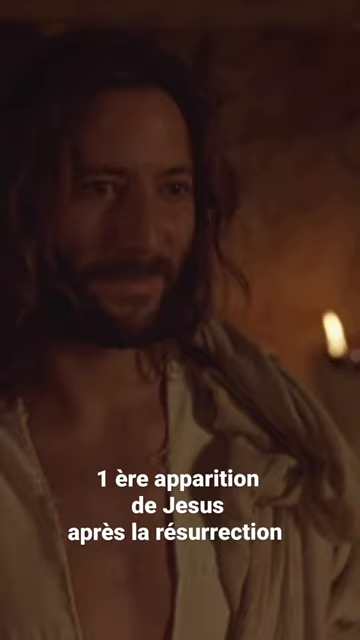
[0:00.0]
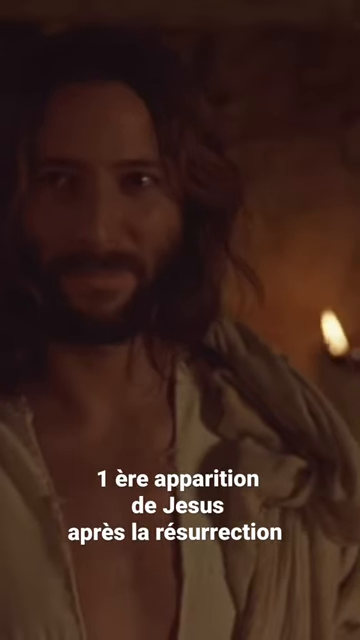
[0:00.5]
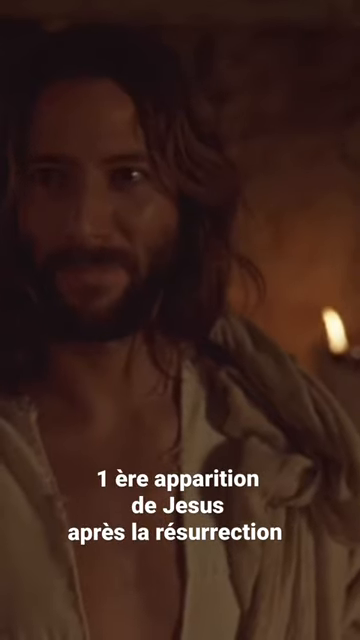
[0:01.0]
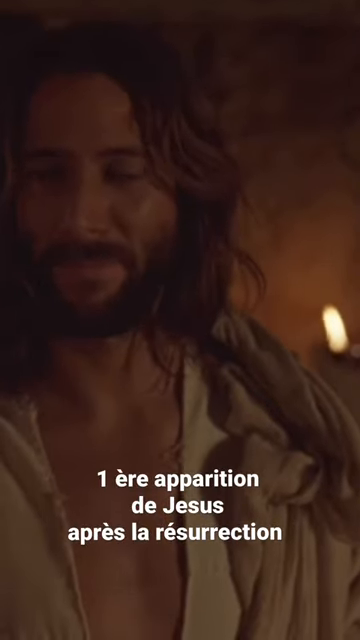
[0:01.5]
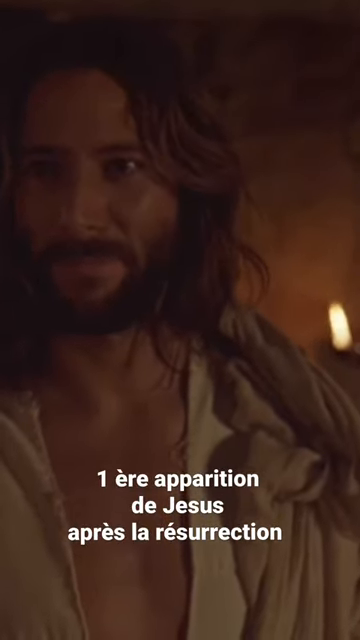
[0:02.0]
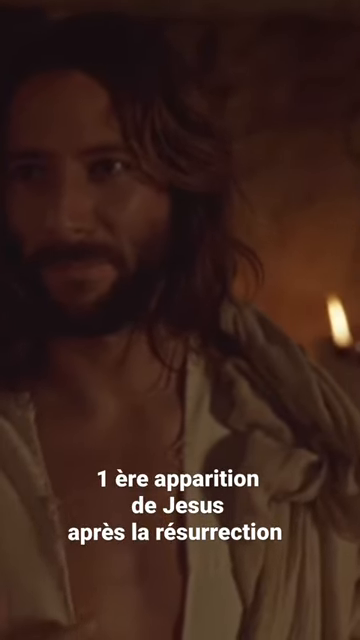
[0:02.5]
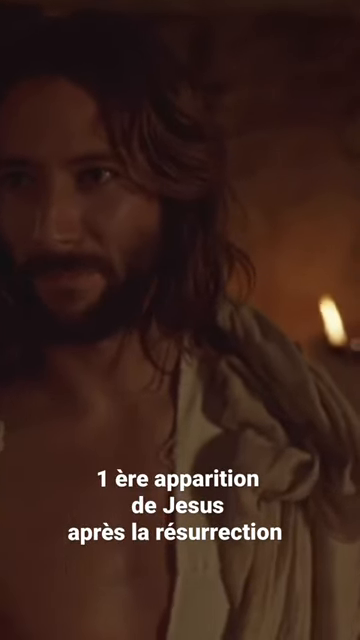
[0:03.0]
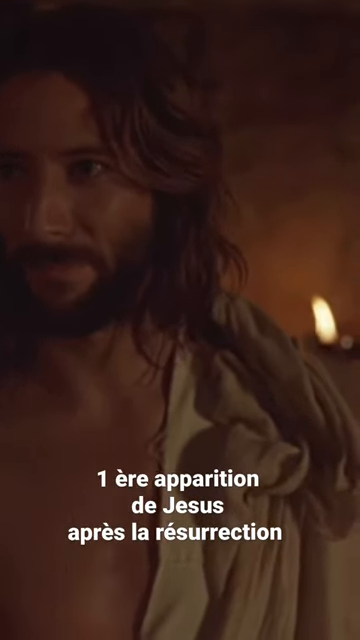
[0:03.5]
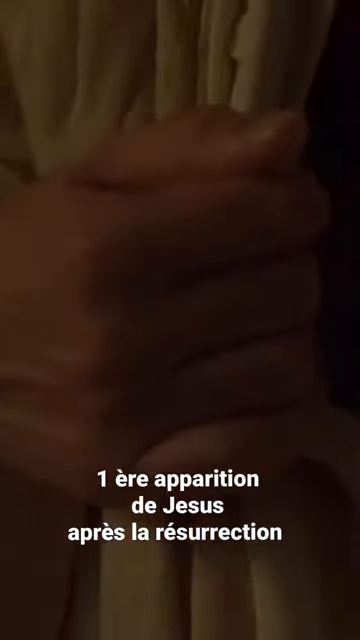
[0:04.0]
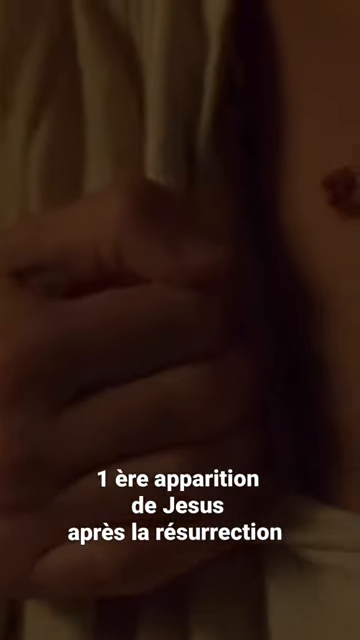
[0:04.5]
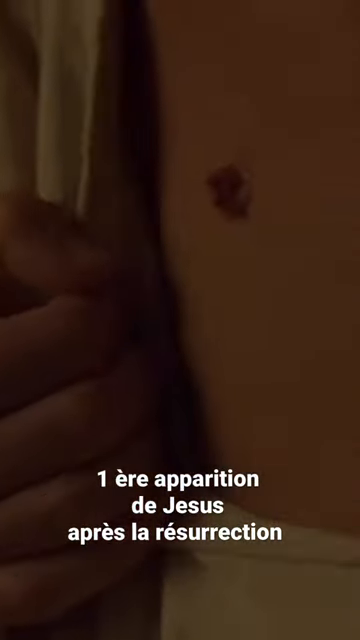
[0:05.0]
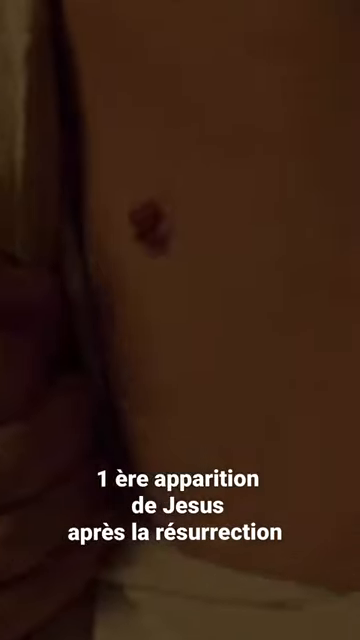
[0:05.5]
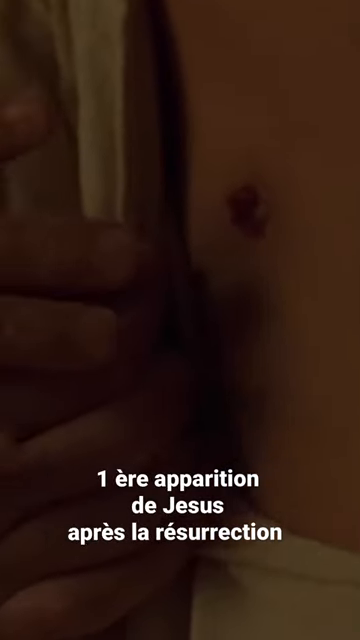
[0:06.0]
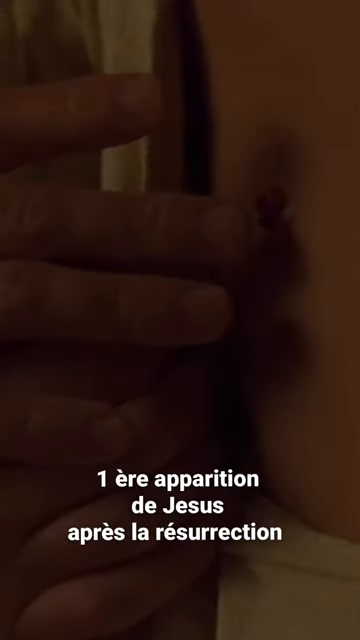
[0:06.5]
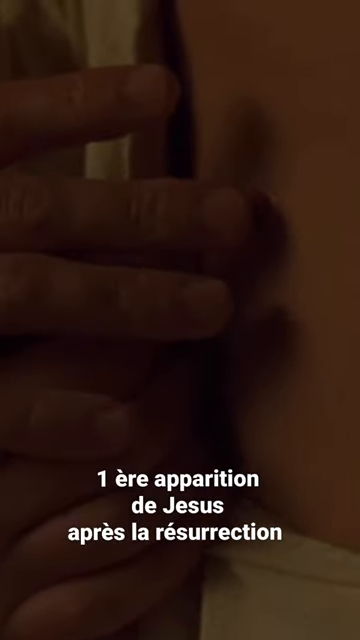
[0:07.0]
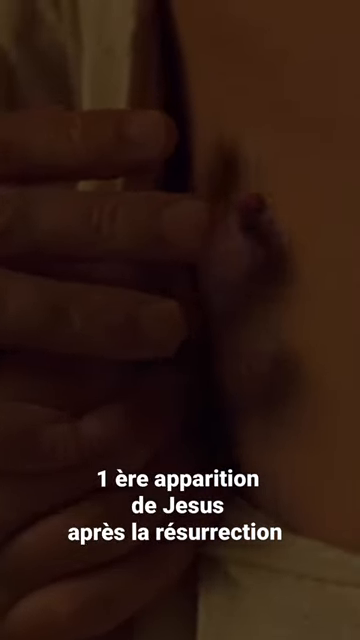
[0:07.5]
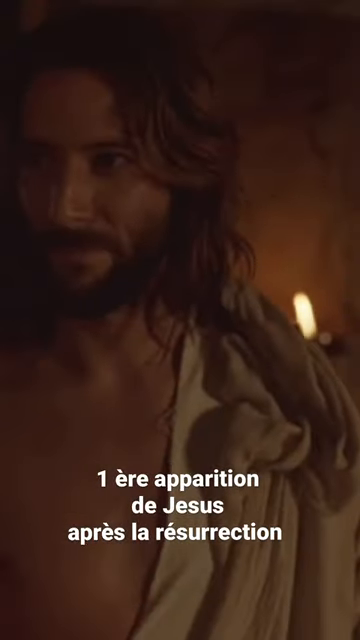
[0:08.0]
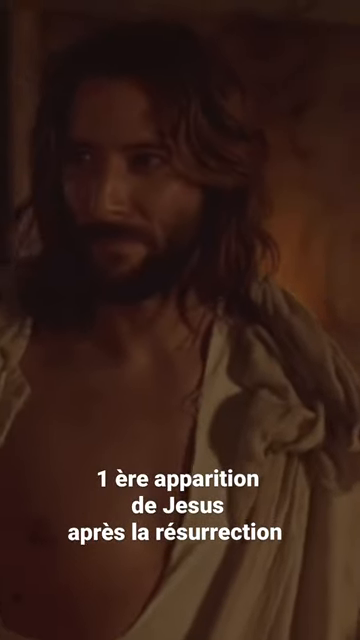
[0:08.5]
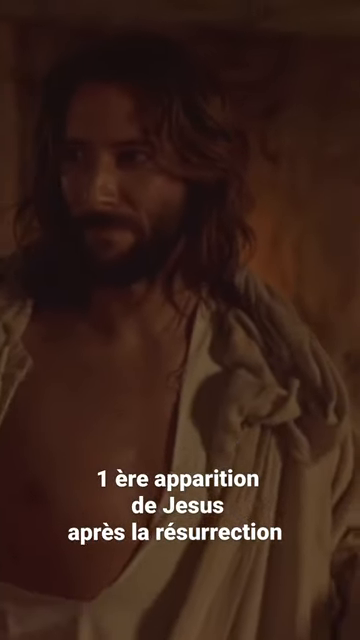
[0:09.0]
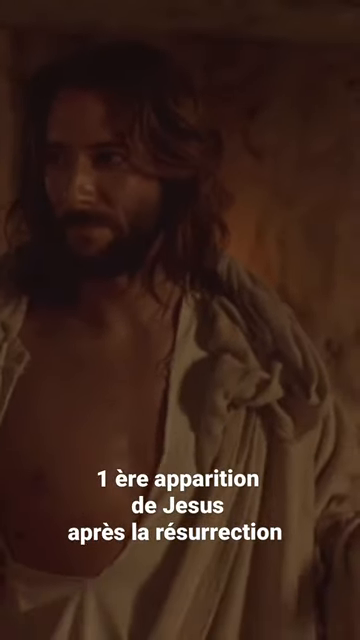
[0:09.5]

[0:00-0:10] In a scene from a movie about Jesus, a very dark, cave-like room is lit with a soft glow by fire torches on the wall. A man dressed as Jesus, wearing robes, is looking forward to the right as the shot begins. He slightly opens his shirt to reveal a wound on his chest and looks around. Text in Spanish at the bottom of the screen reads "1 ere apparition de Jesus apres la resurrection." At the end, the character dressed as Jesus walks forward.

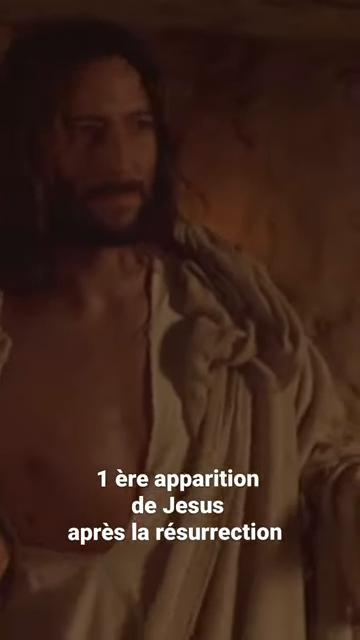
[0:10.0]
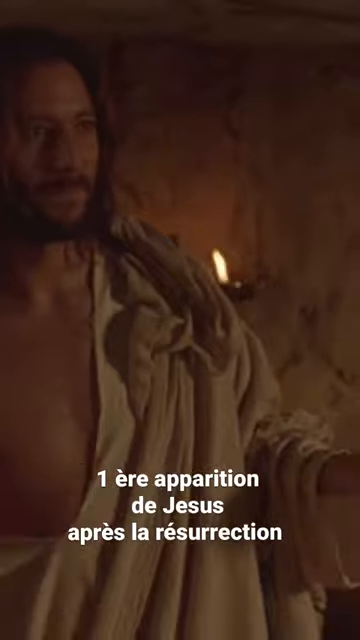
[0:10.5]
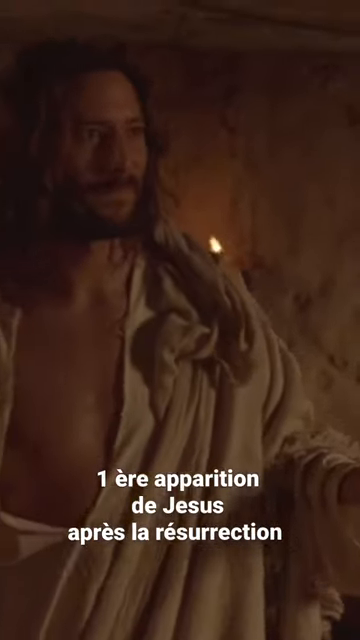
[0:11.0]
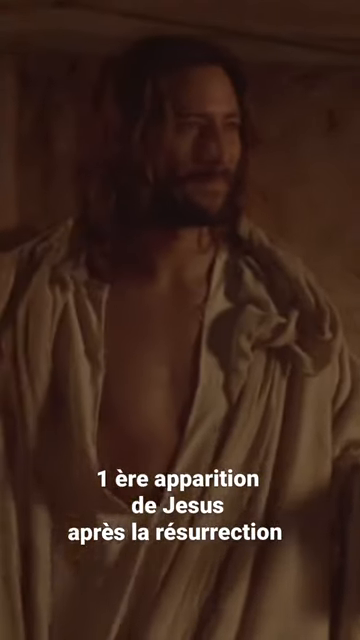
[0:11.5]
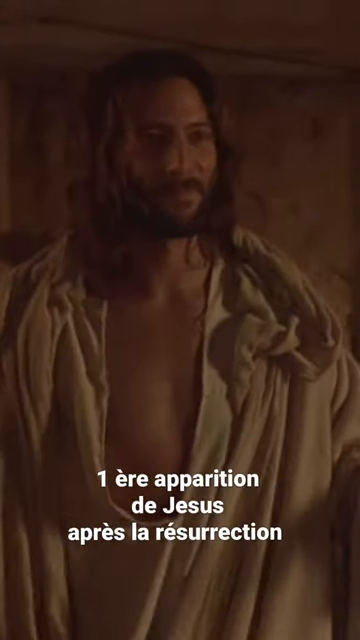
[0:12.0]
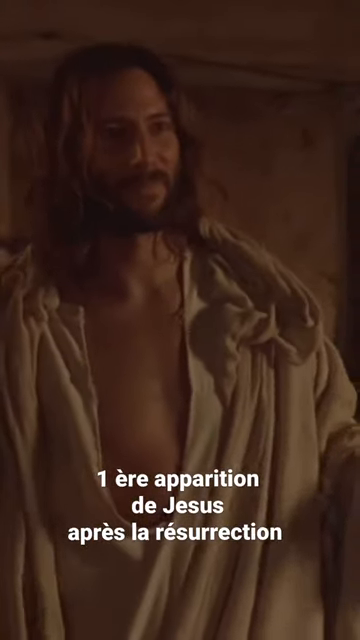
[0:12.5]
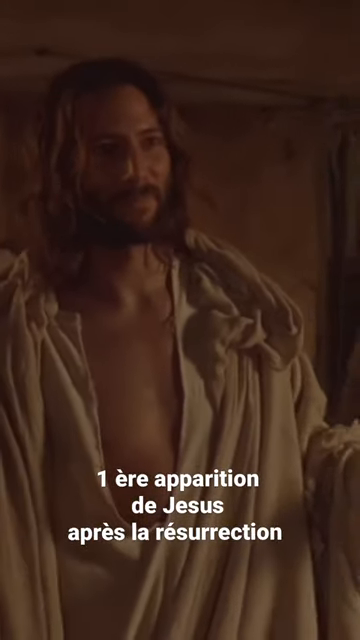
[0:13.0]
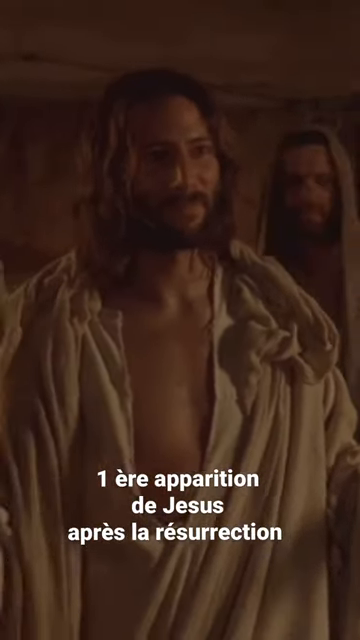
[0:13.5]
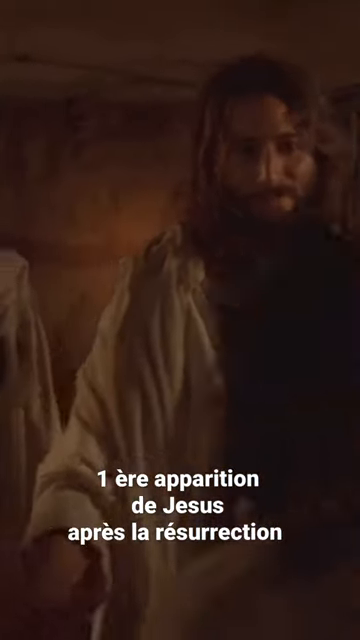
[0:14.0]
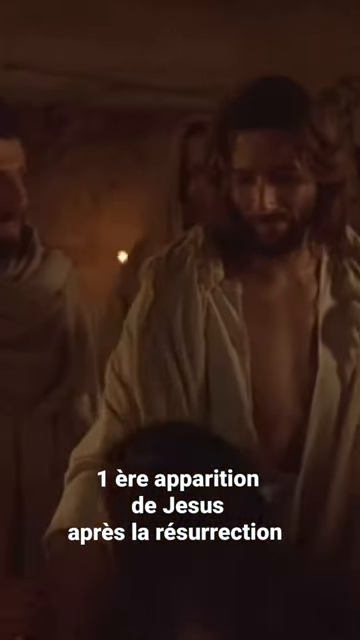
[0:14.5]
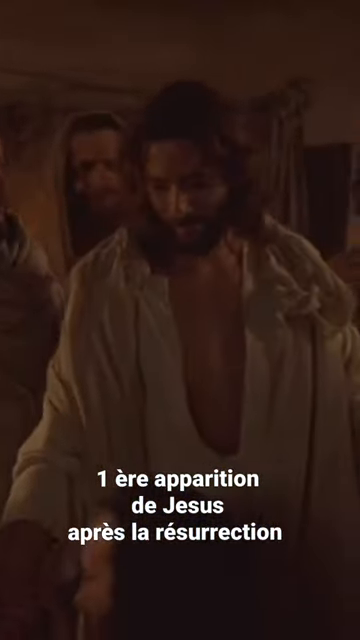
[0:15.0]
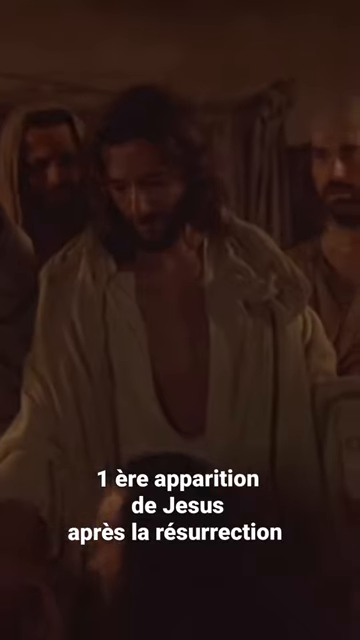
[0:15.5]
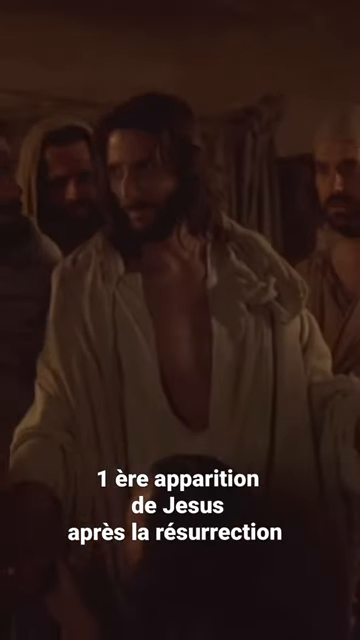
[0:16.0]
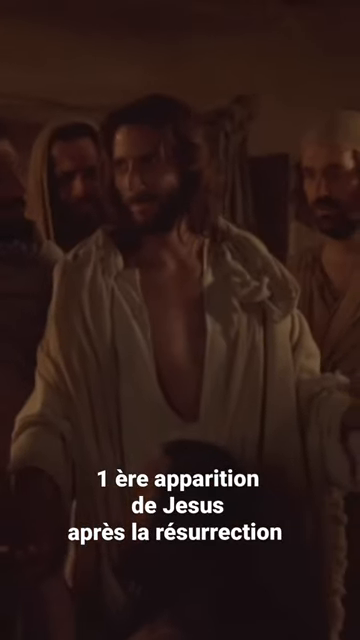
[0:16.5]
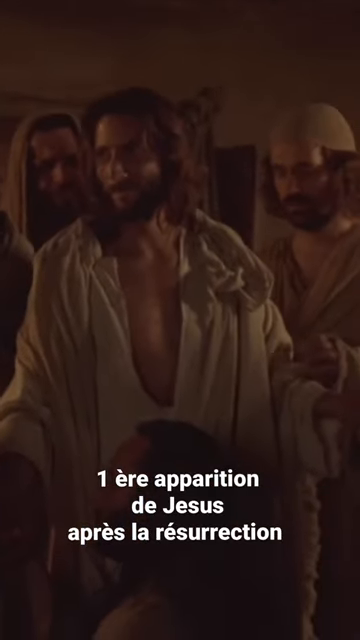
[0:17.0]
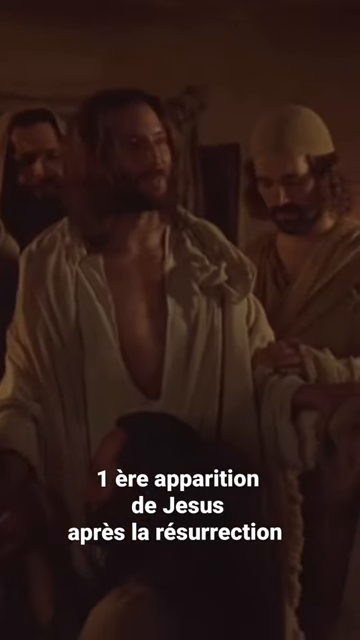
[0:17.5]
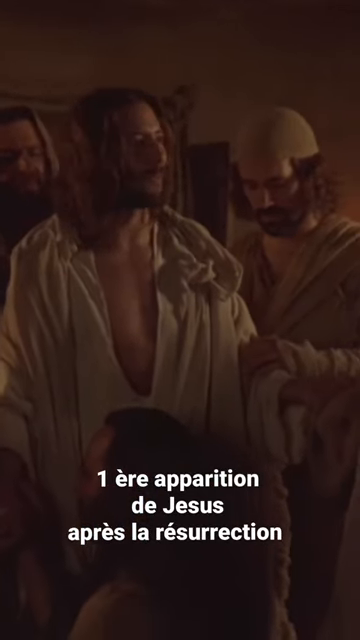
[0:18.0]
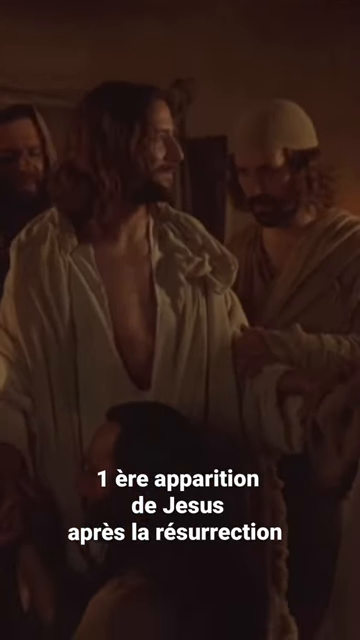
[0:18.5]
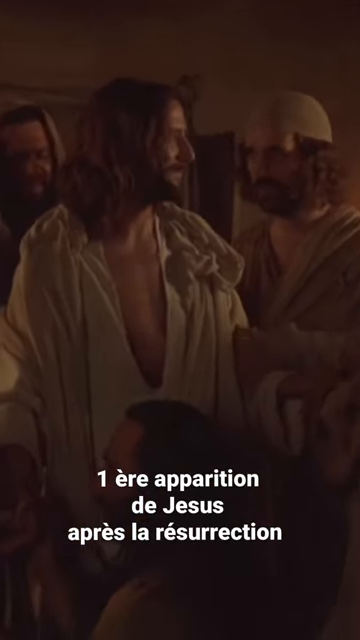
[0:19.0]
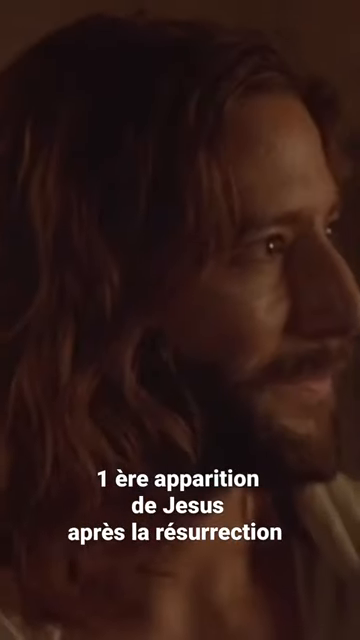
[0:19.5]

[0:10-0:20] The character dressed as Jesus walks forward, and the shot transitions to him standing among a group of men, all dressed in robes. There appear to be five men: three surround him and one is at his feet. As Jesus walks forward, he puts his arms out in front of him. One of the men kneels before him while the other three are behind him, placing their hands on him. Toward the end, the man dressed as Jesus begins to speak to the men.